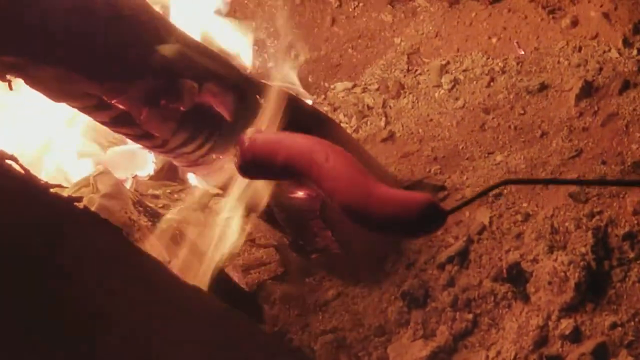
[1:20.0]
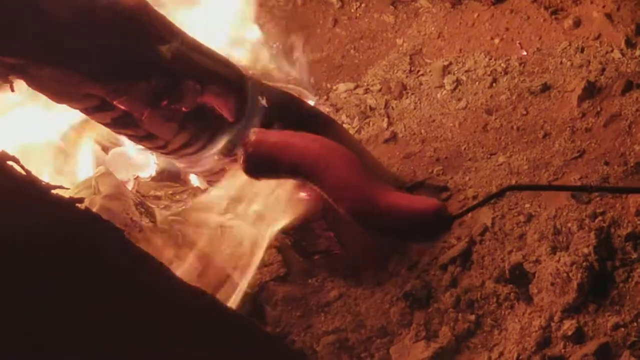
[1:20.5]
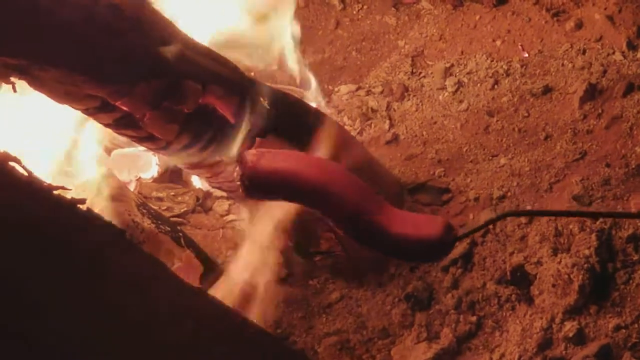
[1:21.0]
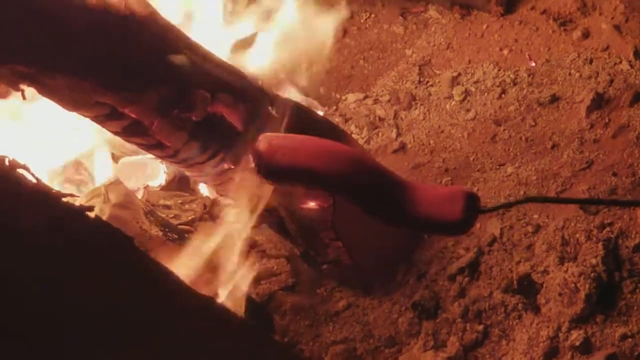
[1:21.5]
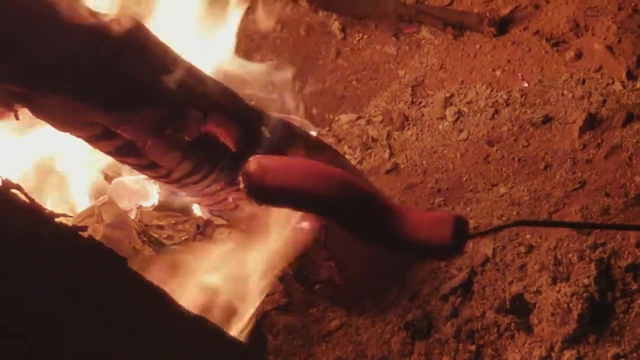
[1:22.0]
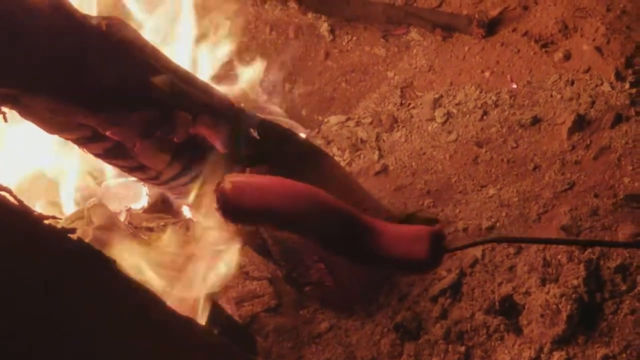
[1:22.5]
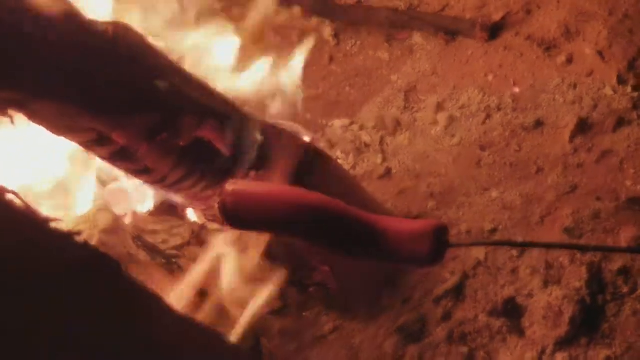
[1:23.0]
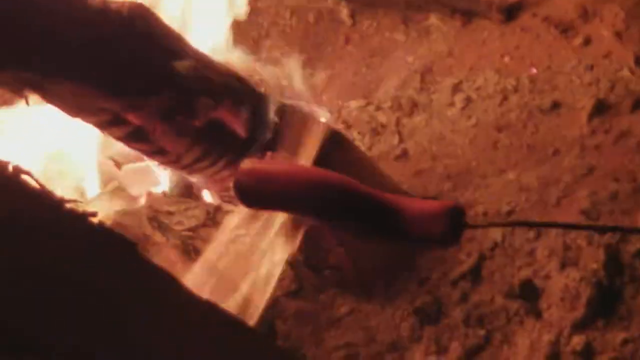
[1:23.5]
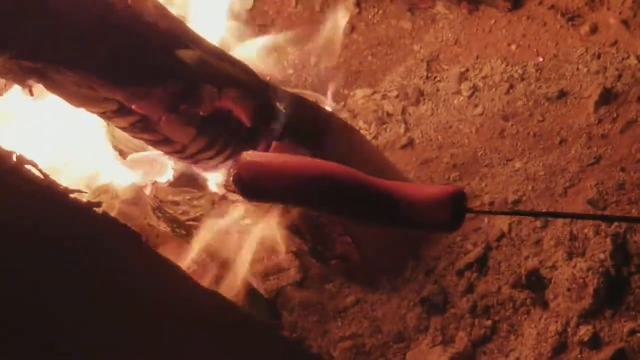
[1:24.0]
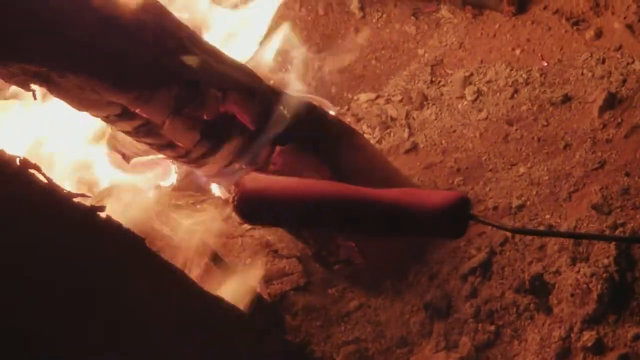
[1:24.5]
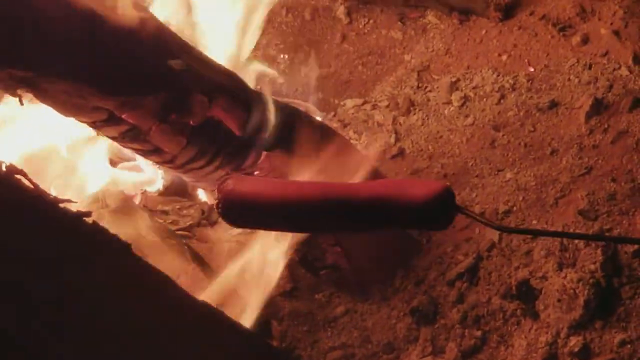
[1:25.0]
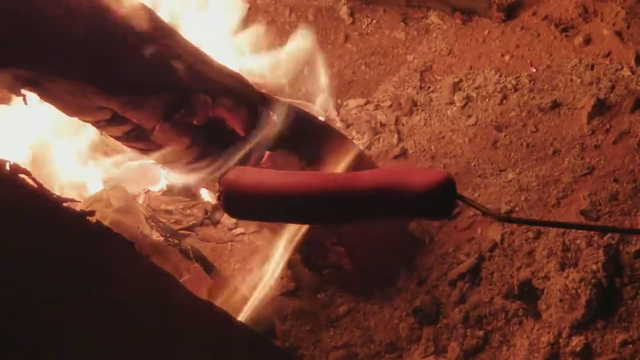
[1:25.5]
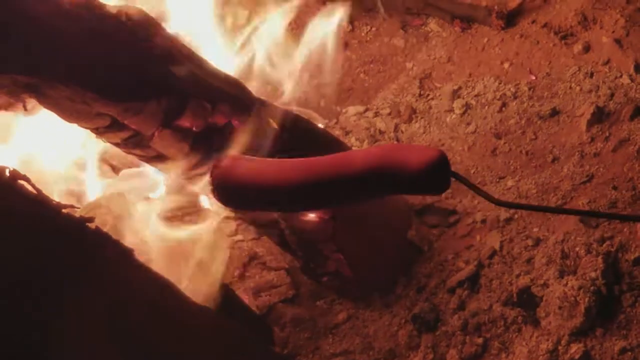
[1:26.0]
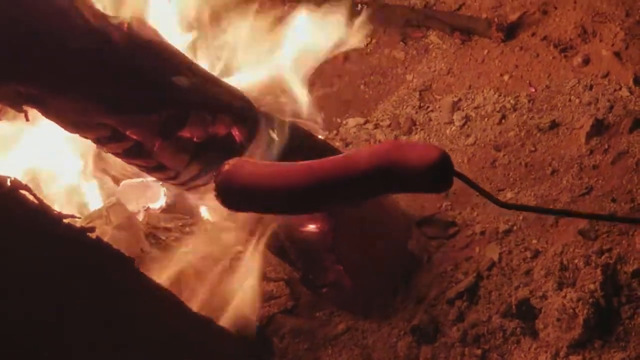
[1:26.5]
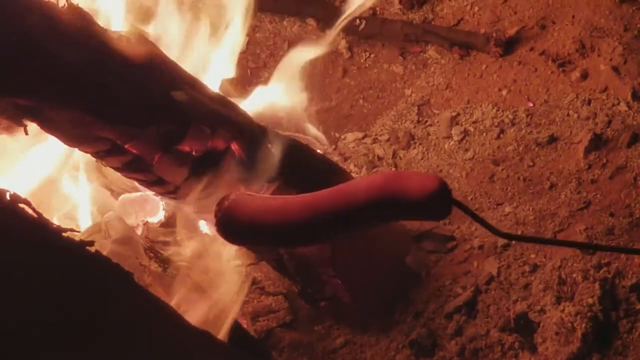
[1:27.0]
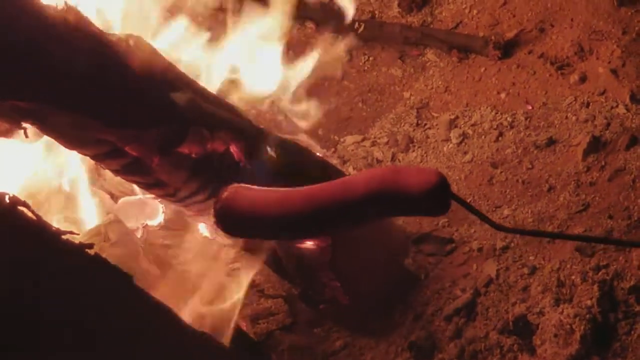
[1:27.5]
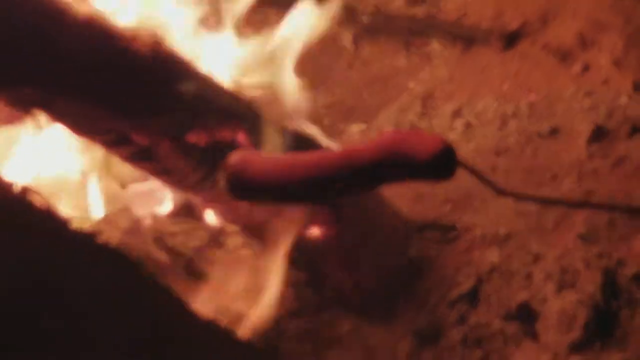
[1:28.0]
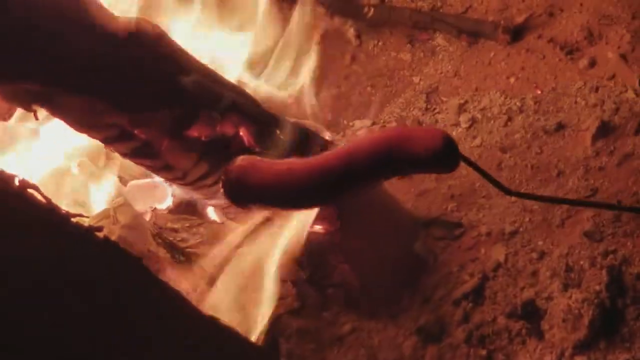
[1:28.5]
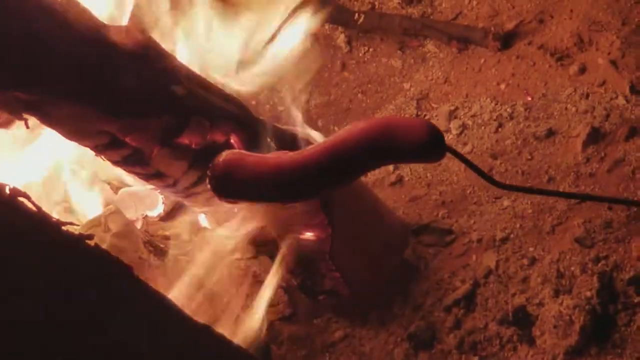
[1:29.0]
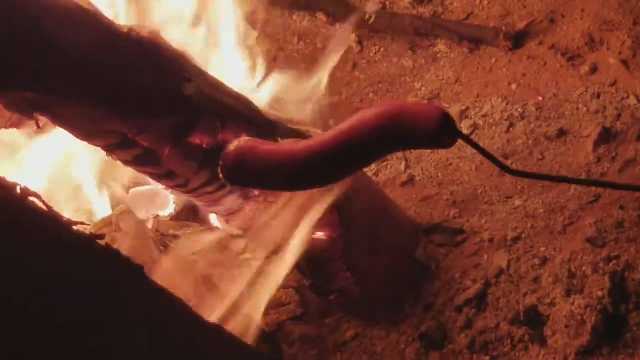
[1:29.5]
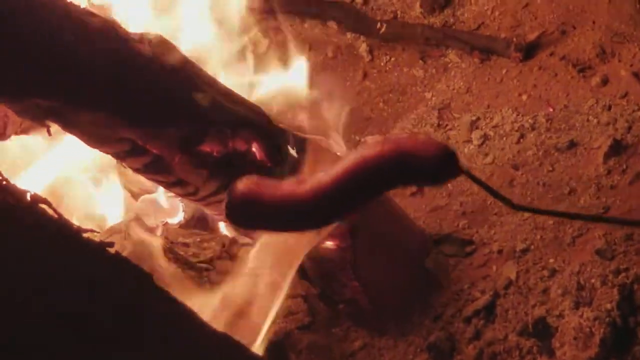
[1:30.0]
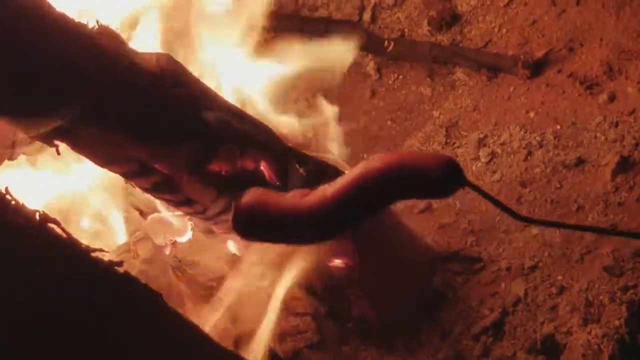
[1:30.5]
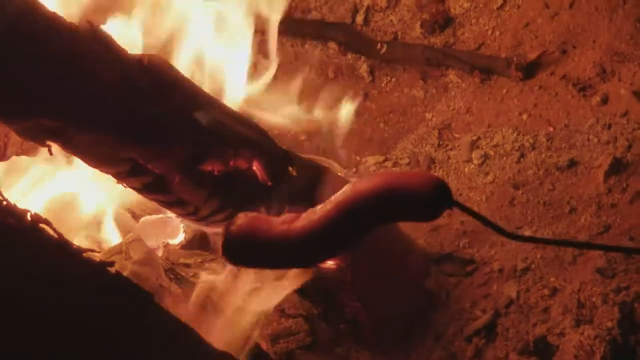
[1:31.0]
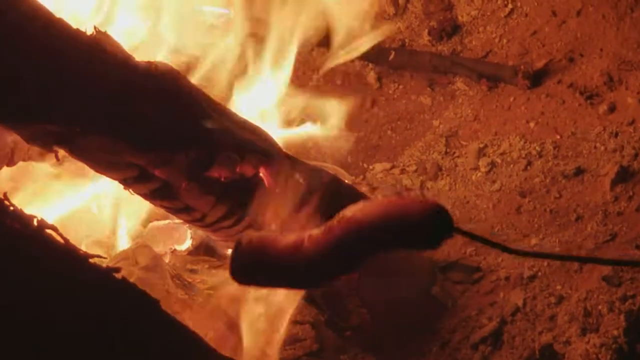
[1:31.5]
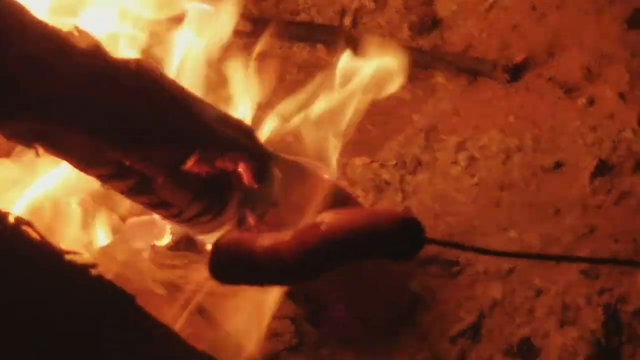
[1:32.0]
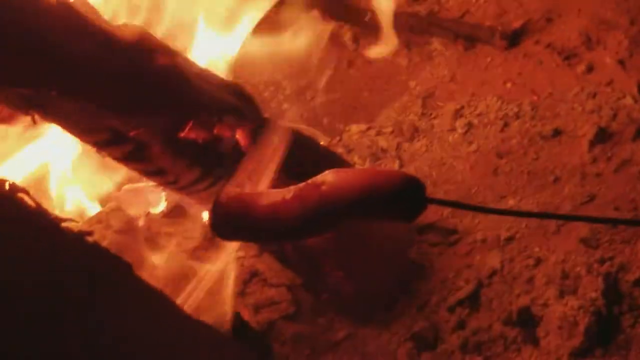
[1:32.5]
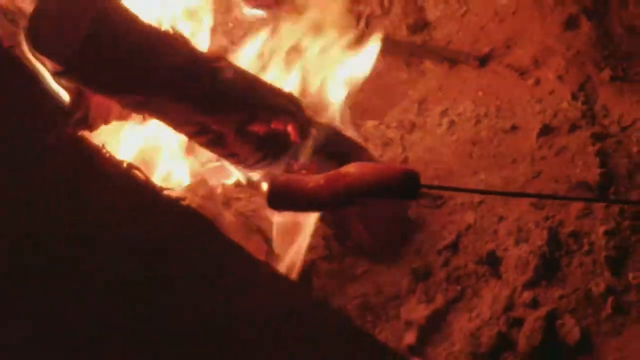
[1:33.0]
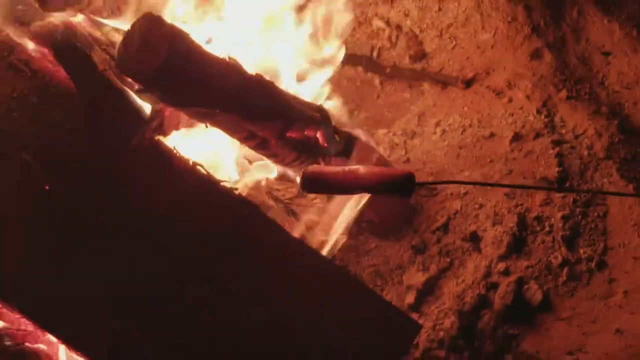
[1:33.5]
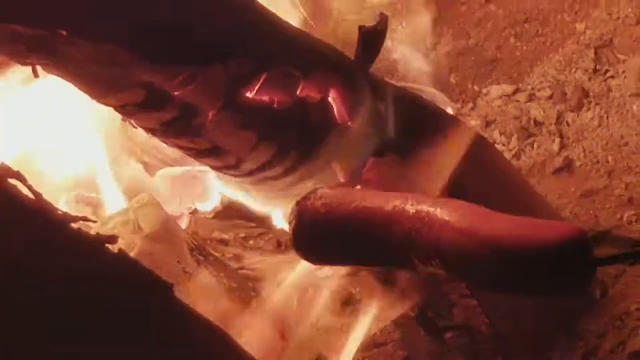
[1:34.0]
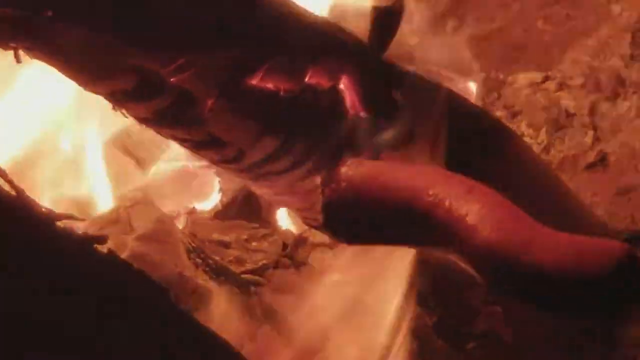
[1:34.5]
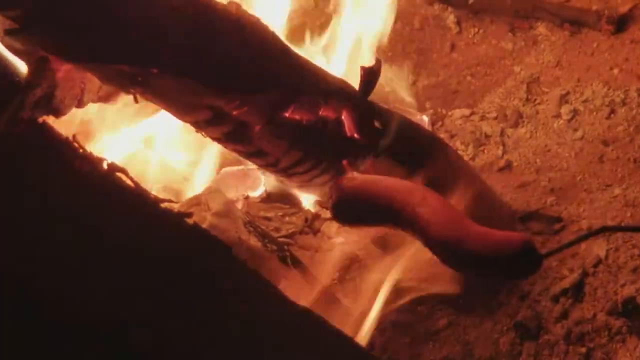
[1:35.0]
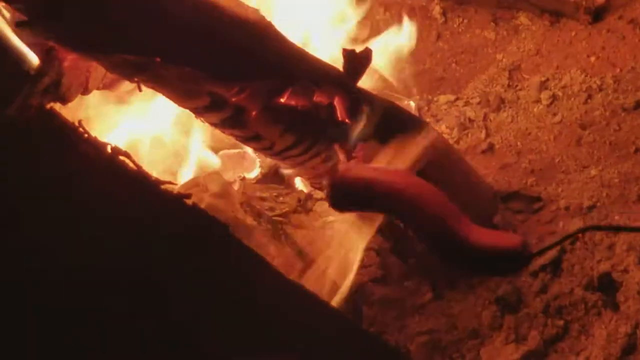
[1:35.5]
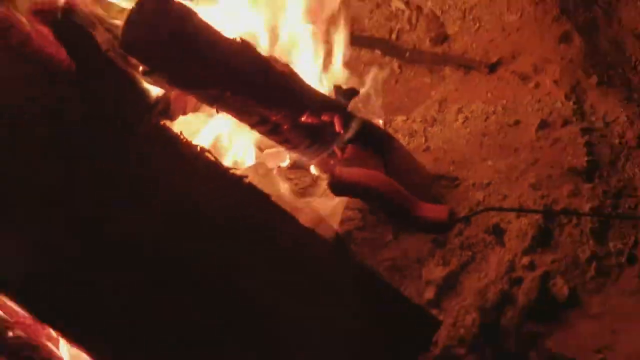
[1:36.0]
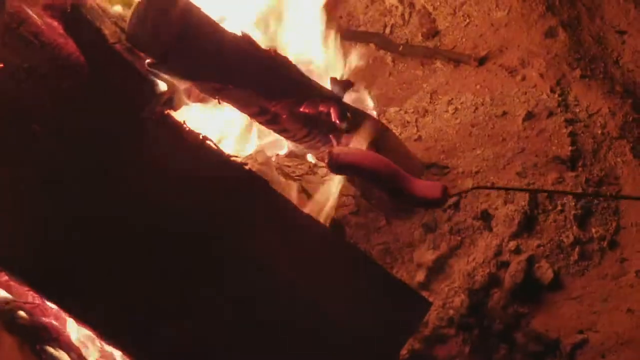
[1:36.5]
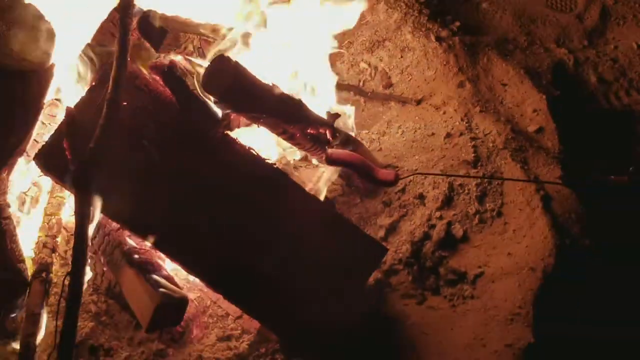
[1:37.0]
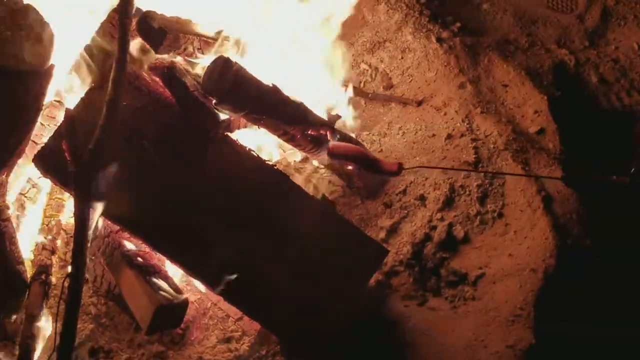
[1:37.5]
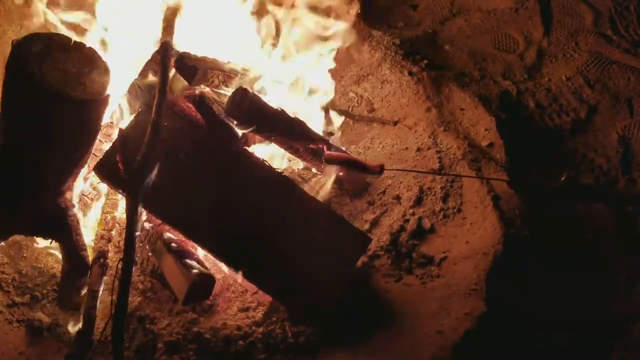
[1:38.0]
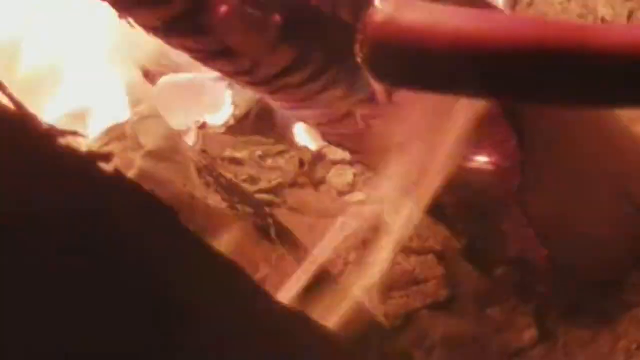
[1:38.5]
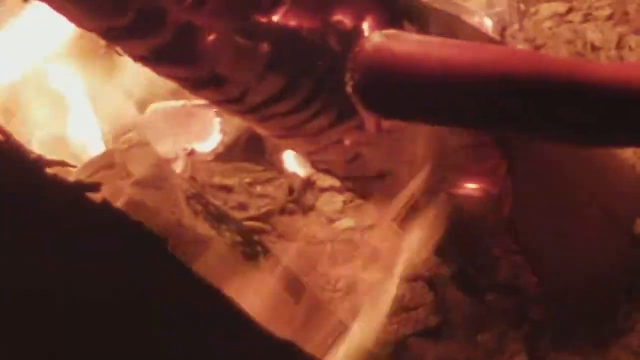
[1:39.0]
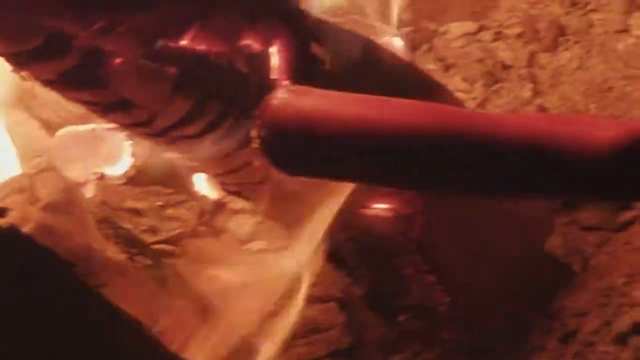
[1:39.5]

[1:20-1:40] The fire keeps burning beneath the sausage as it is turned at a slow pace, not fast. The person holding the camera then zooms out, showing the length of the firewood and how high the fire is burning. Nothing appears besides the stick, the sausage and the fire.